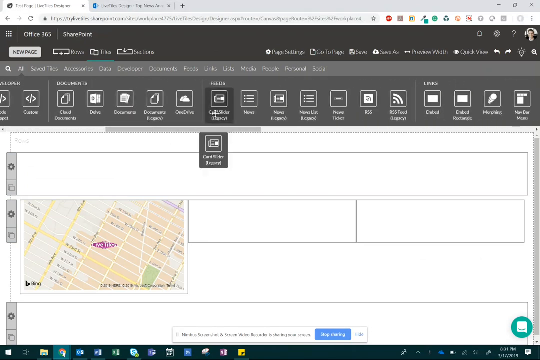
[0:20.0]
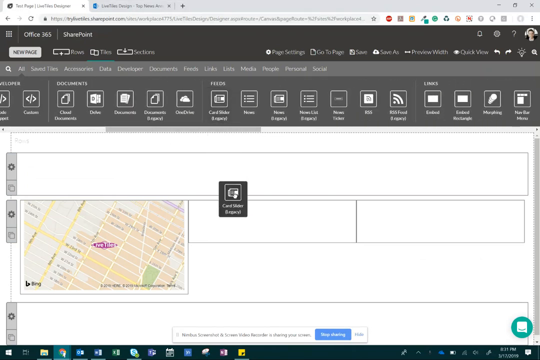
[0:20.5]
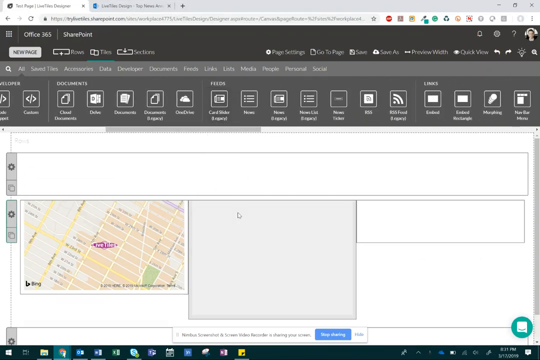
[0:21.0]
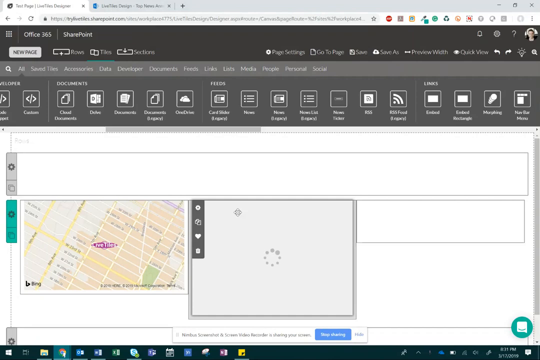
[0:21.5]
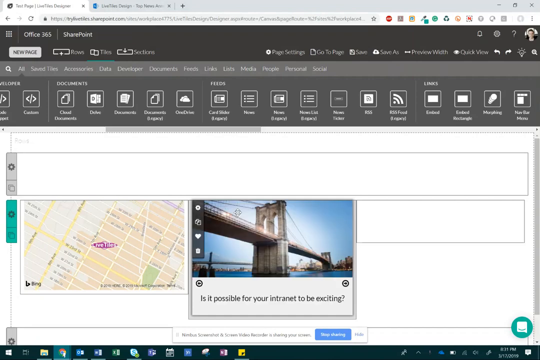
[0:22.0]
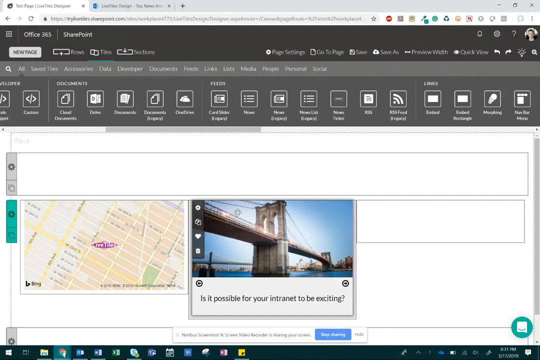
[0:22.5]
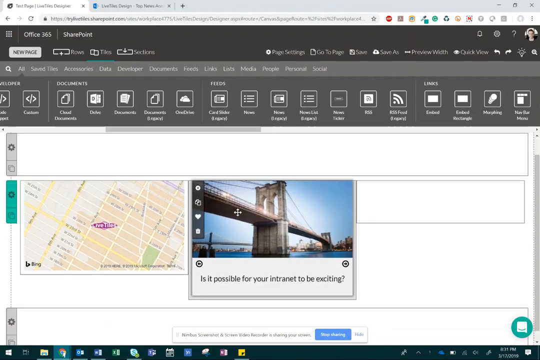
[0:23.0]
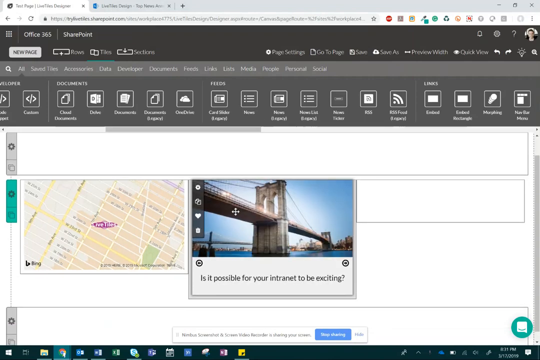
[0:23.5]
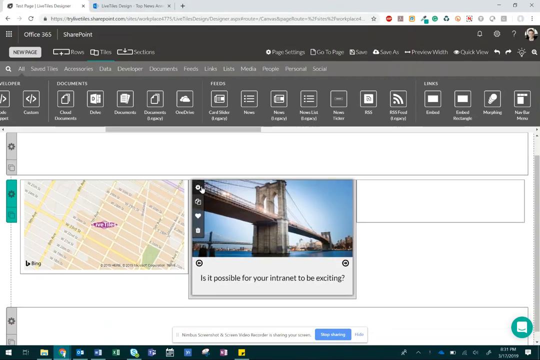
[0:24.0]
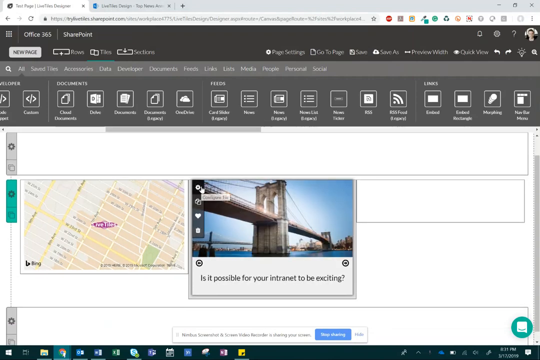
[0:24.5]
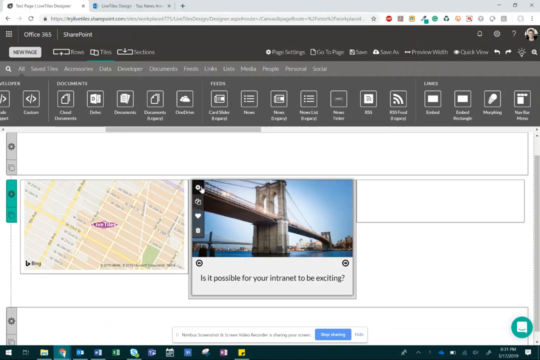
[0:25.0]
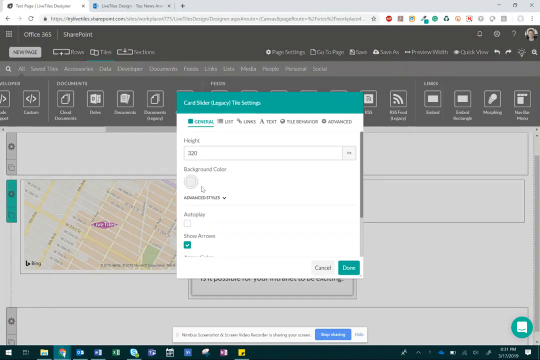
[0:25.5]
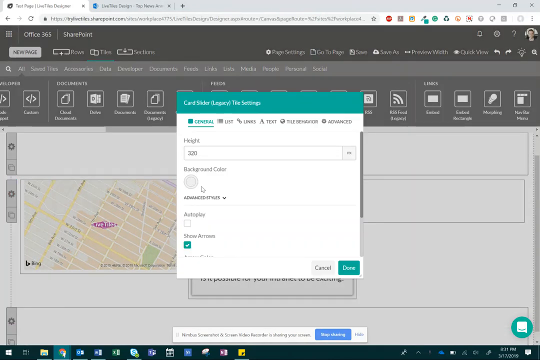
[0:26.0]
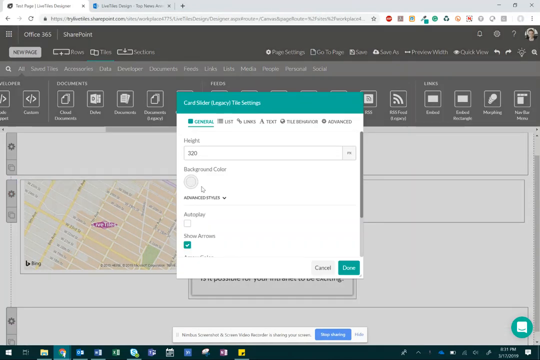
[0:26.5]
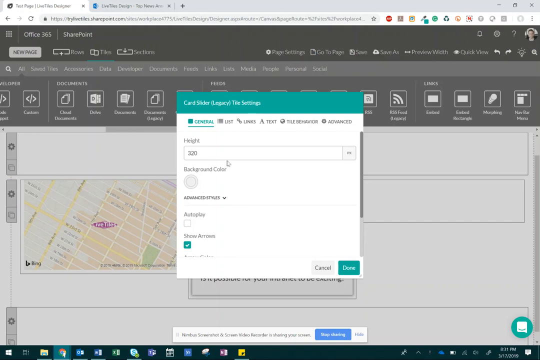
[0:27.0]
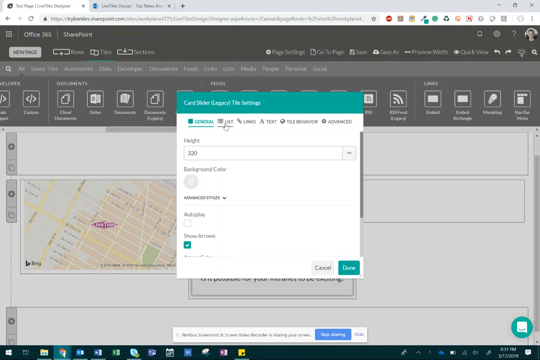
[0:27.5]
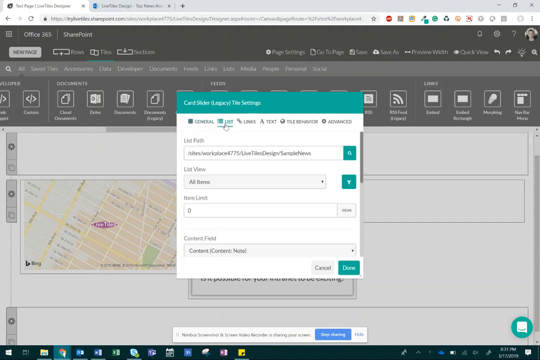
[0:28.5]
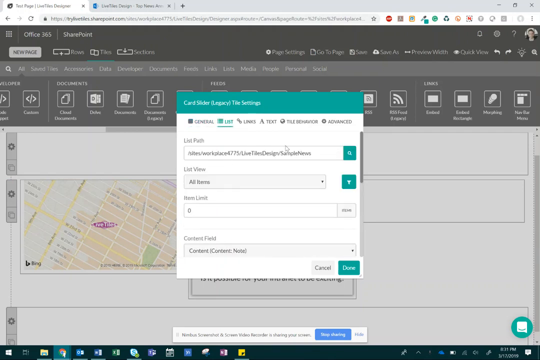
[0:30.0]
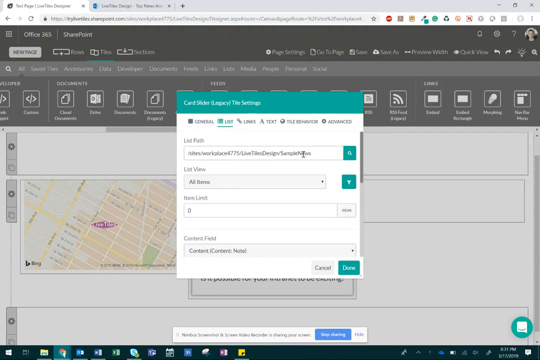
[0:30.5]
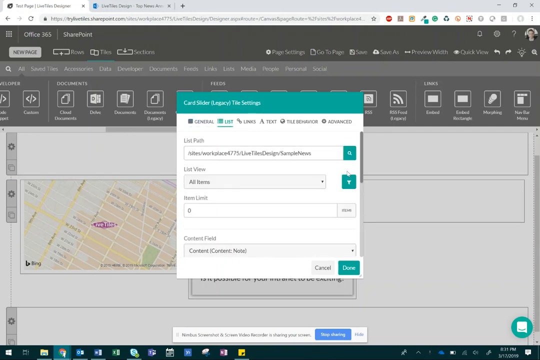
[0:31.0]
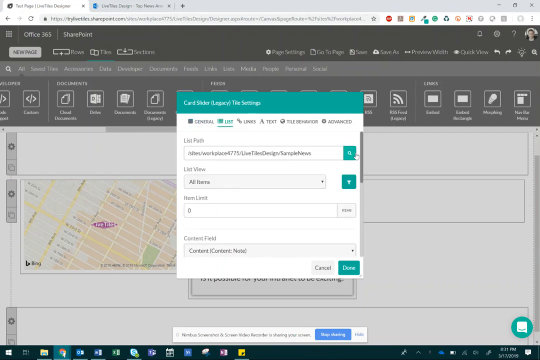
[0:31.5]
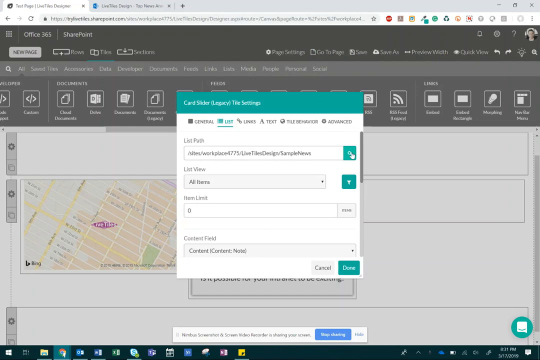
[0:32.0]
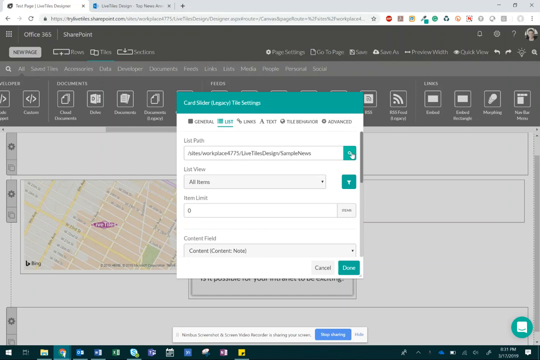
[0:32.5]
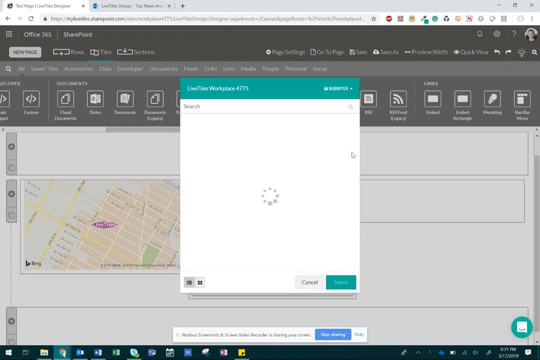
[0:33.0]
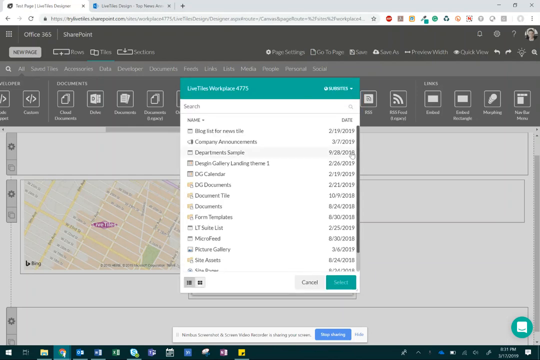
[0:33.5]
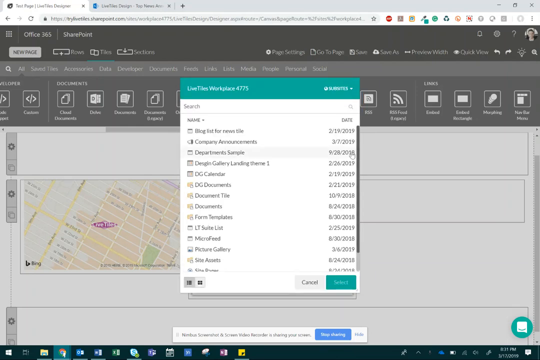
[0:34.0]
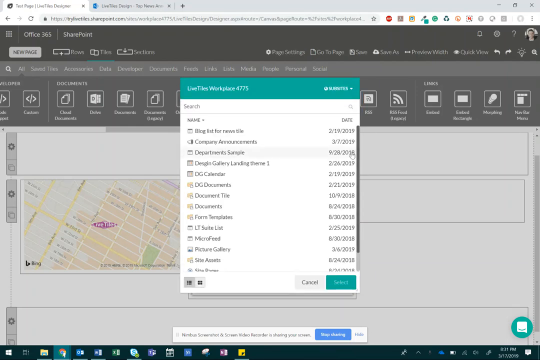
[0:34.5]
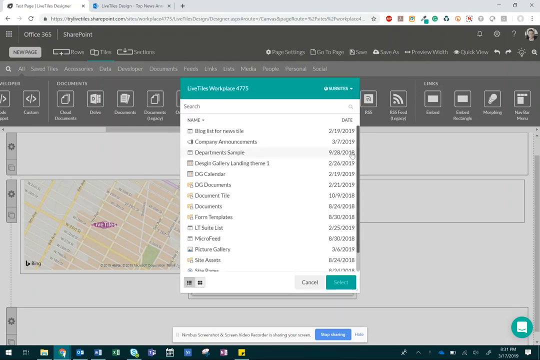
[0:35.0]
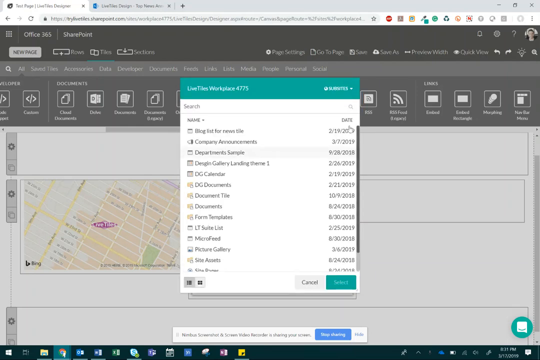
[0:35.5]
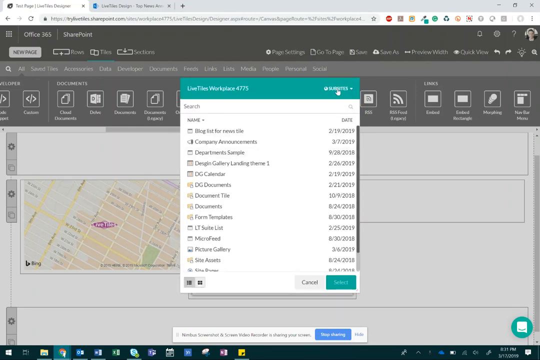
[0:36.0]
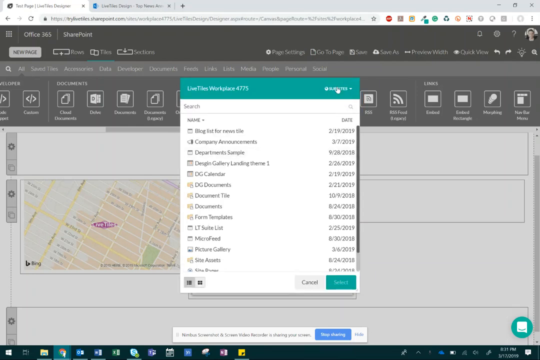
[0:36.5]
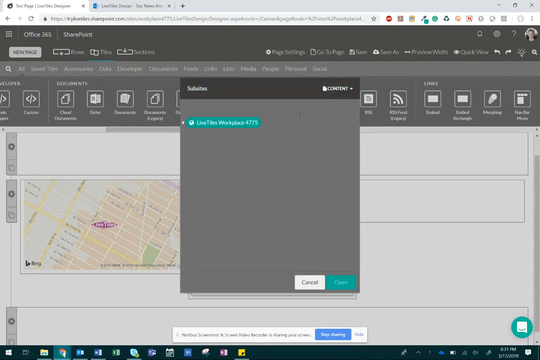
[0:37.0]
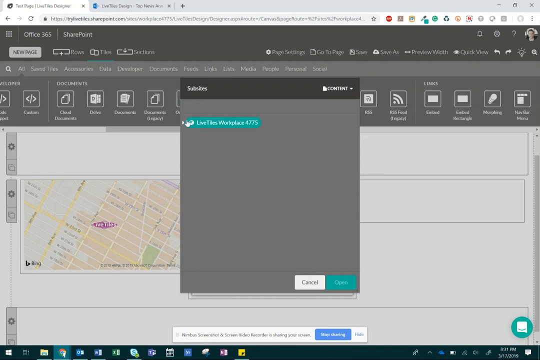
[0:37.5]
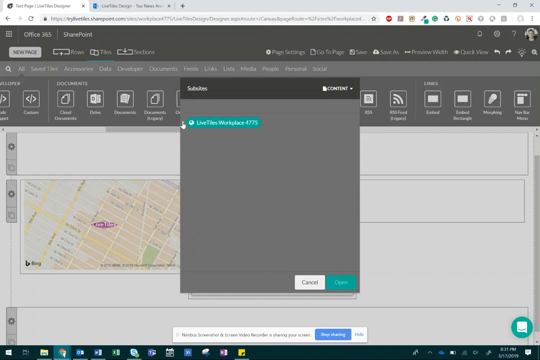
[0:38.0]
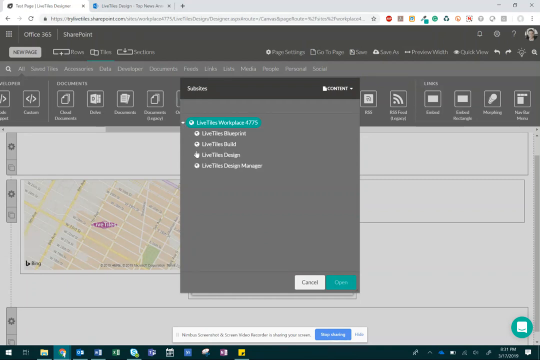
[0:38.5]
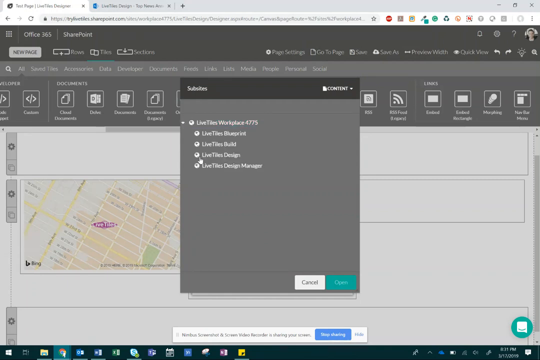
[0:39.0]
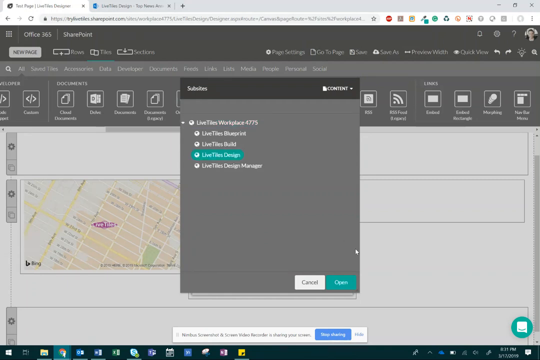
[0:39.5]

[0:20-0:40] The top of the website has a black background with multiple icons, and the mouse hovers over one of these icons. Underneath the black background is a white background with various rectangles. A map is shown toward the center left of the website. The mouse drags one of the icons toward the center, and it expands to be shown as a bridge. Text underneath the bridge says "Is it possible for your internet to be so exciting?" An options and editing view opens, viewing the makeup of one of the images. After a selection, a list of various items appears, including documents along with their dates. Another selection is made and a new list comes out. The tabs have a green background for the heading at the top, with white underneath, and there are sparse green blocks next to each of the choices that can be made.